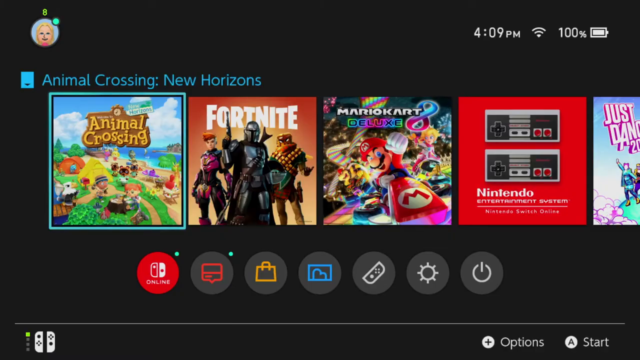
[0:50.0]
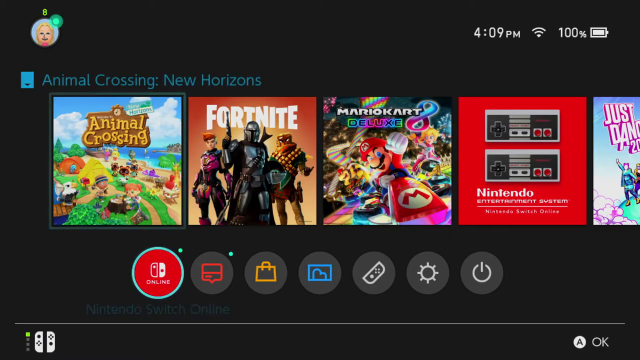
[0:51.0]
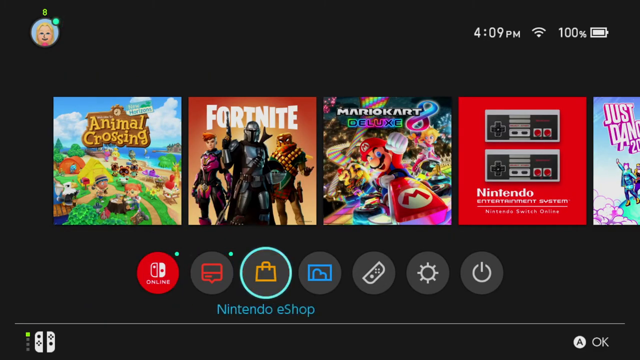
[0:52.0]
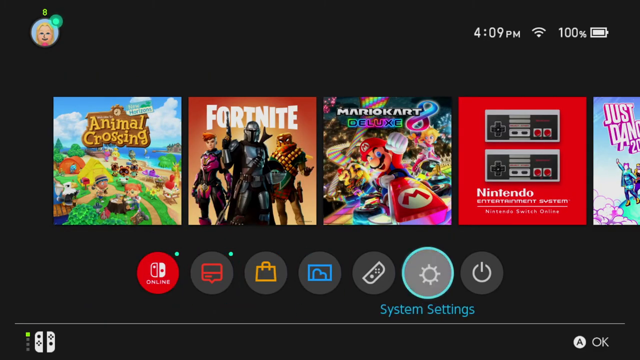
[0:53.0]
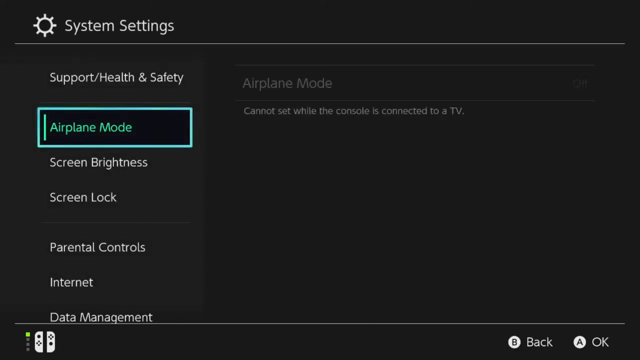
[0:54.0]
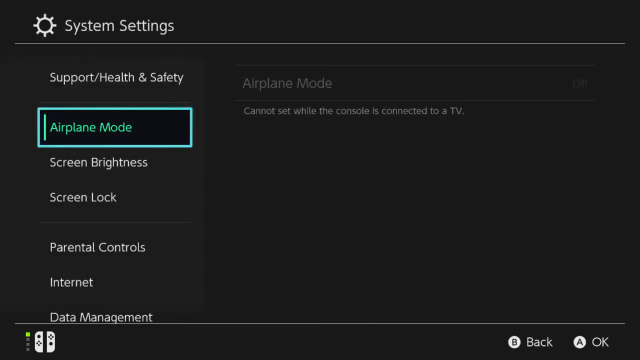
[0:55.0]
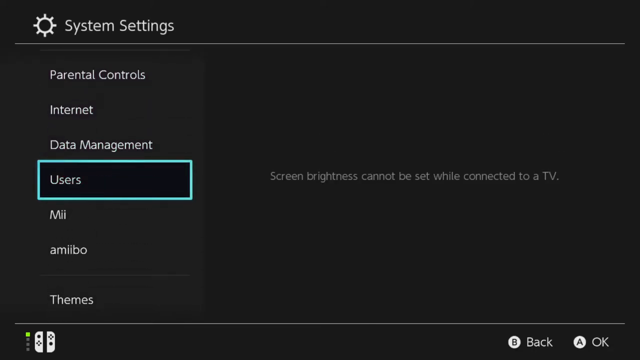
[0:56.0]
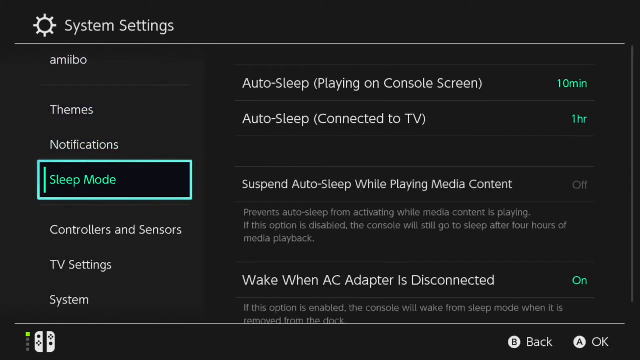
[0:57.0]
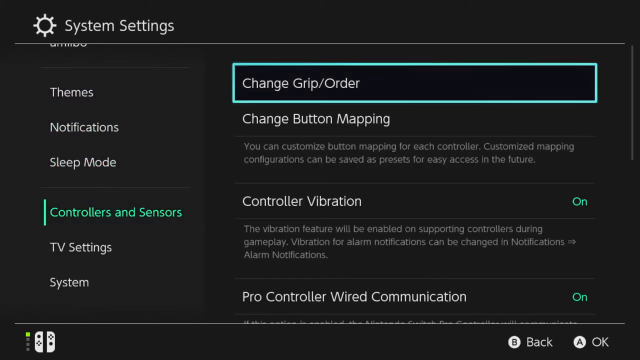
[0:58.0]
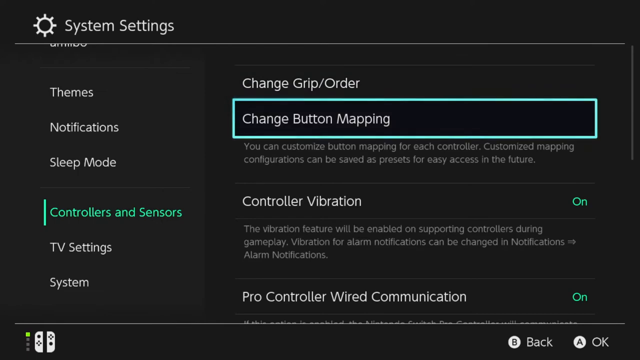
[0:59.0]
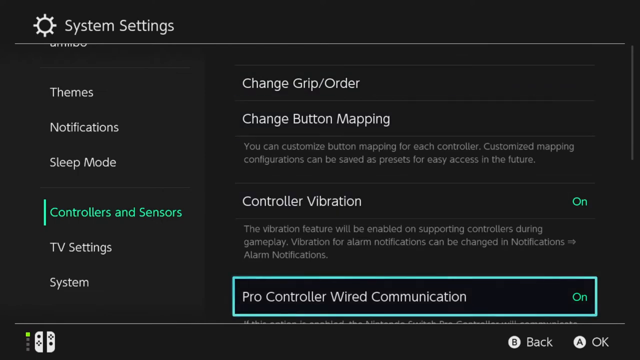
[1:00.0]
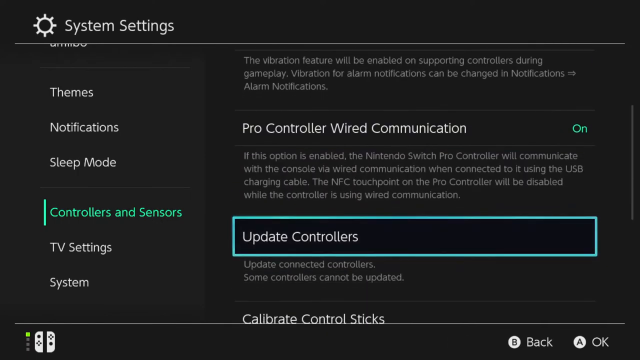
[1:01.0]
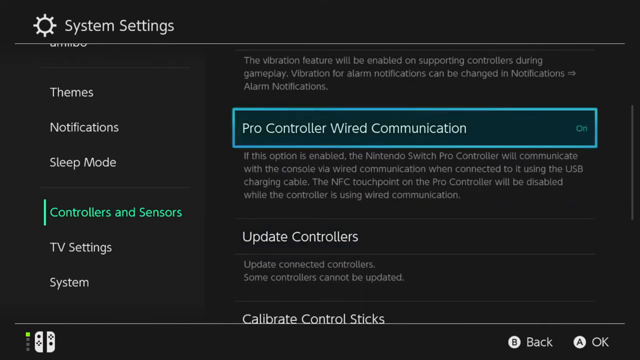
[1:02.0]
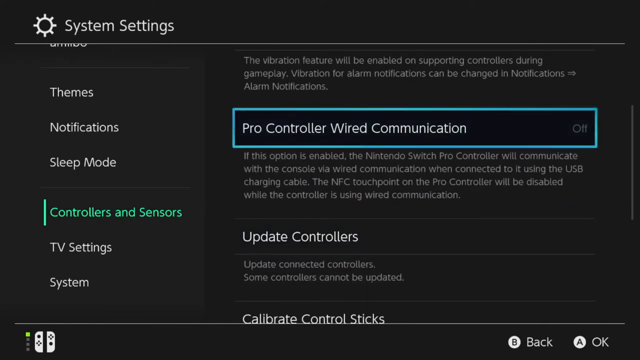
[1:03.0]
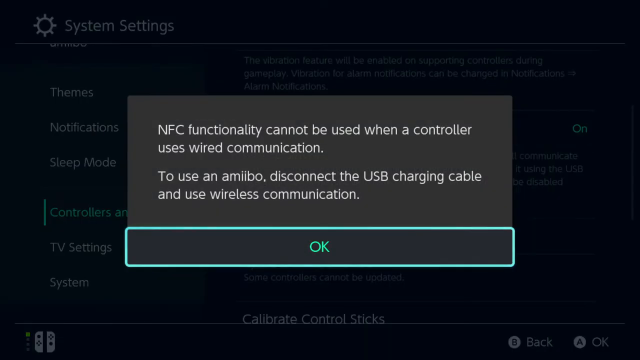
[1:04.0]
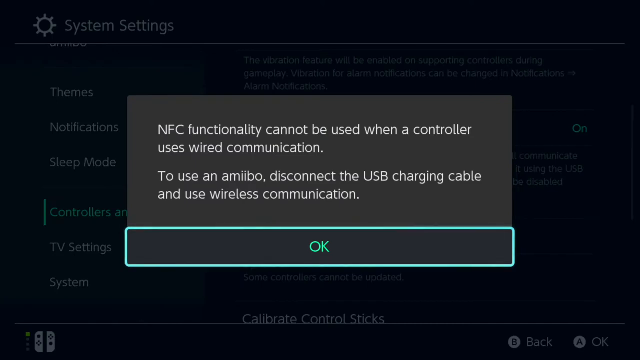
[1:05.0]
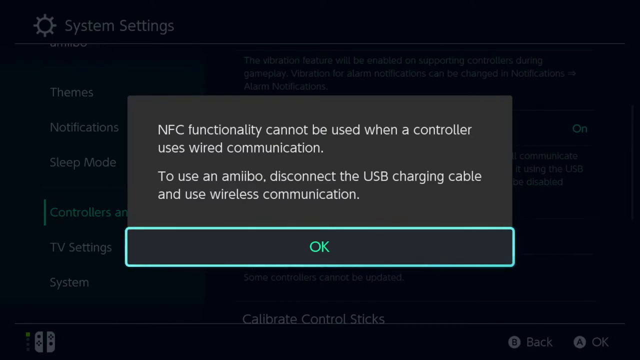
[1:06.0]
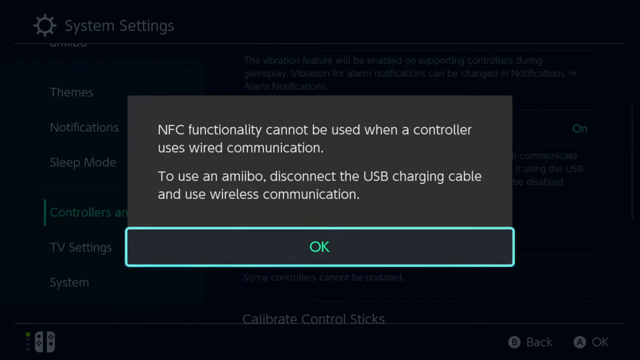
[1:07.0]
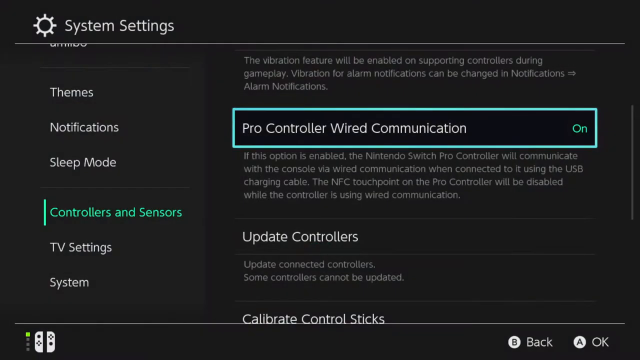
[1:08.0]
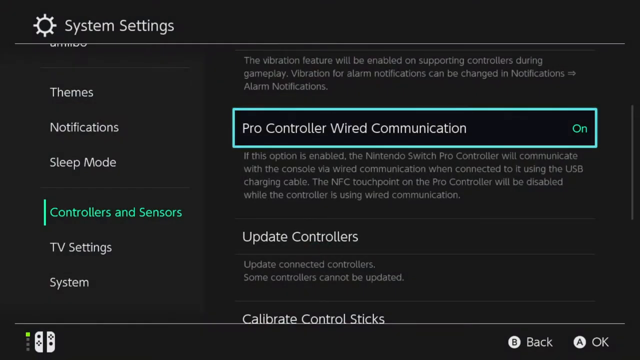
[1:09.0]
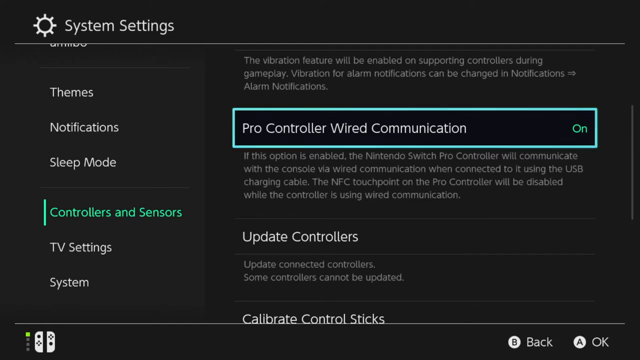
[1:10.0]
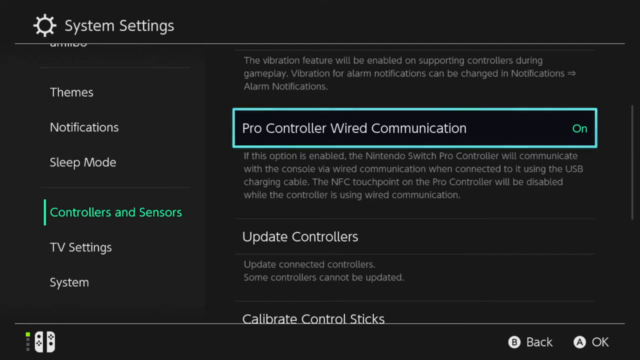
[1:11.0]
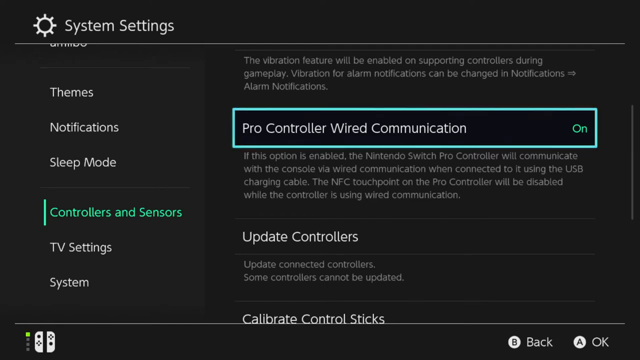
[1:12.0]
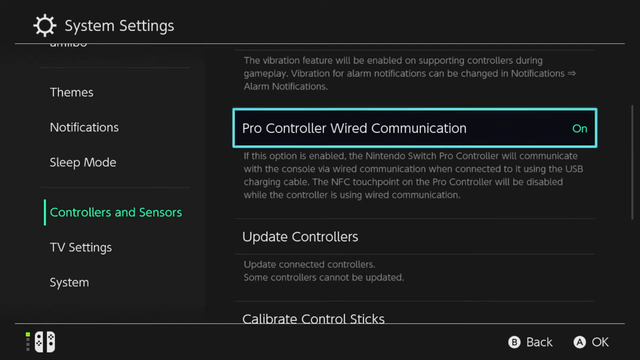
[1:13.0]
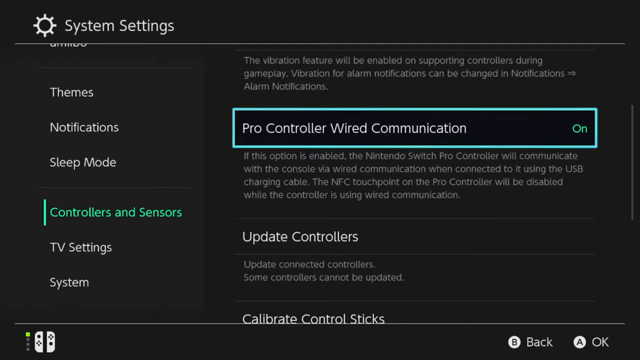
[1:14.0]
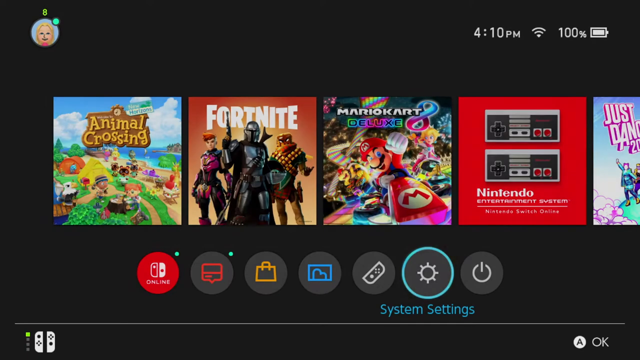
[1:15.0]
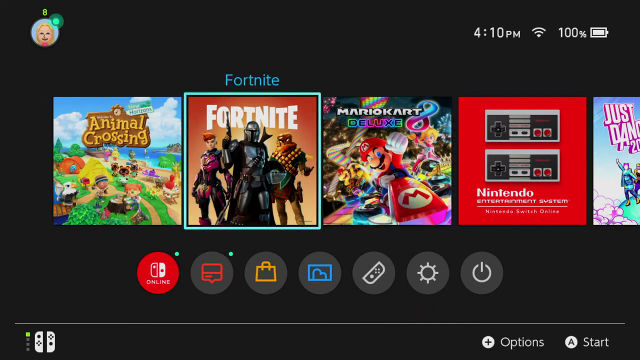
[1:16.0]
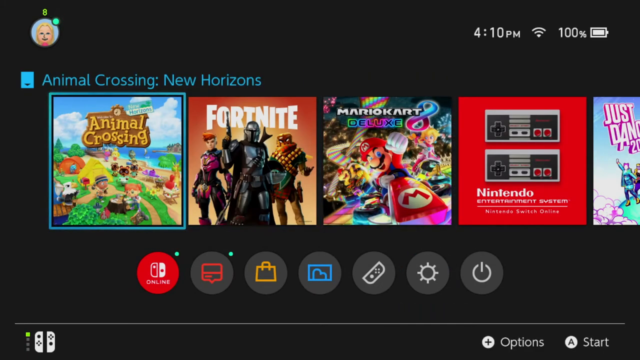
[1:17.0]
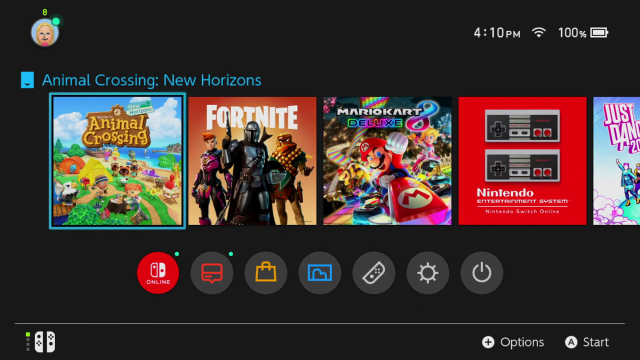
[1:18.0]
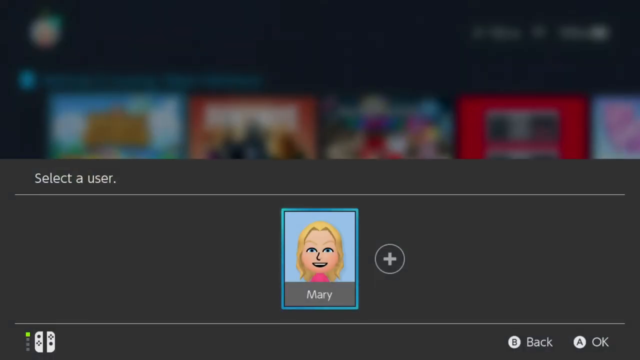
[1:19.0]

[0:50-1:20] A screen shows selections for video games, and someone picks the first one. They go to system settings, highlight controllers and sensors, and highlight the pro controller. A pop-up appears where they can hit okay, and wired communication then shows as on. They go back and choose Animal Crossing New Horizons, then select a user, and an icon with their profile picture comes up. The video then goes back to show the selections they could have picked from. They go to airplane mode and sleep mode, highlighting until they reach controllers and sensors, and update the controllers to the pro wired controller. A pop-up appears where they can hit okay; they do, and confirm that the controller shows as on, highlighted in a turquoise box. The icon they chose with their name appears in the upper left-hand corner. The screen shows the time as 4.09 p.m., the battery at 100% charged, and a full Wi-Fi connection.